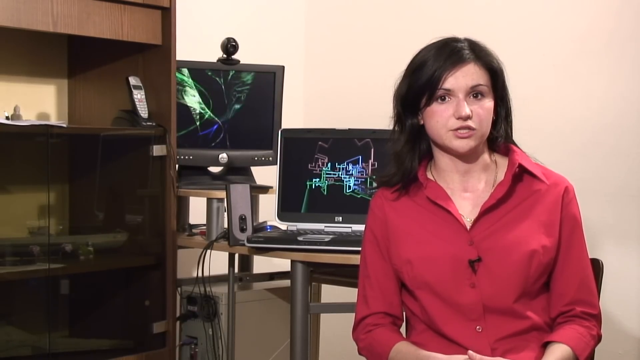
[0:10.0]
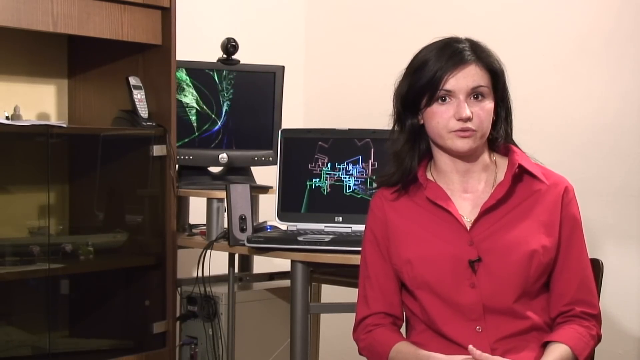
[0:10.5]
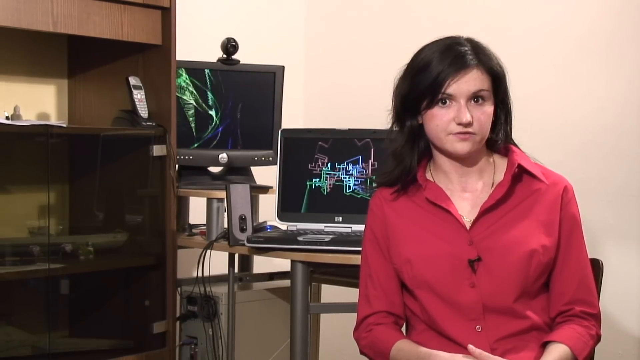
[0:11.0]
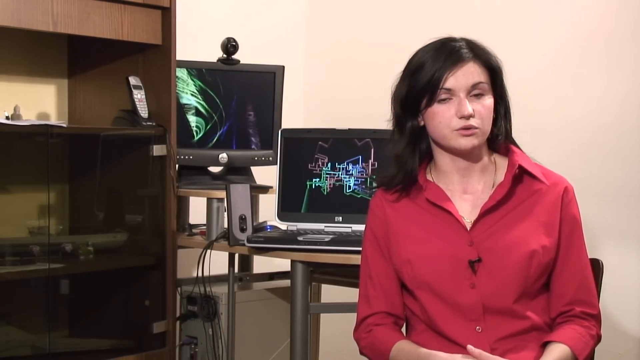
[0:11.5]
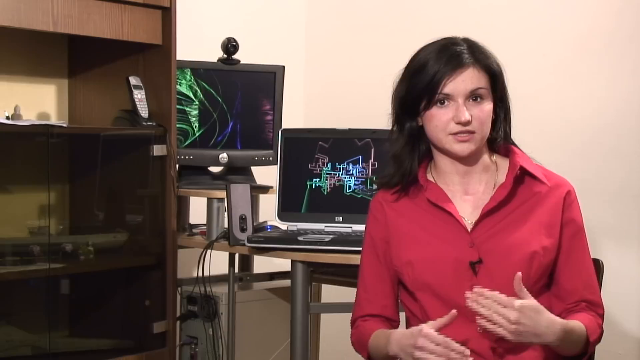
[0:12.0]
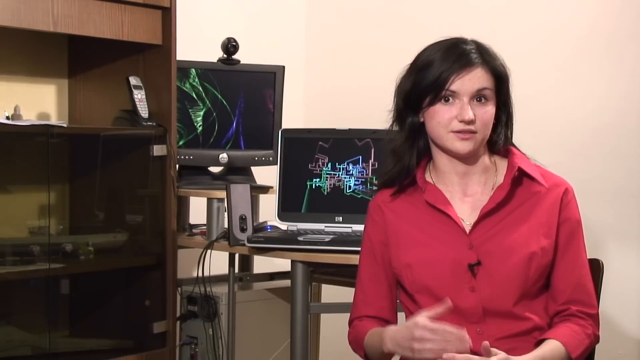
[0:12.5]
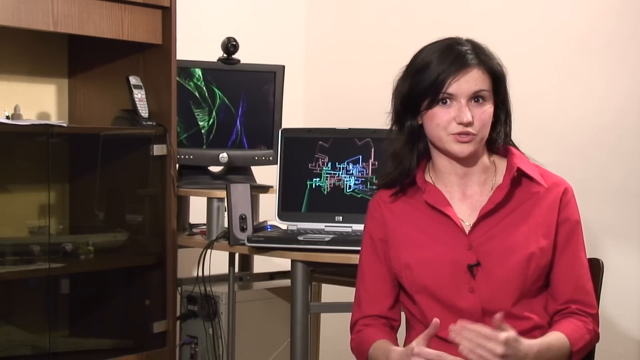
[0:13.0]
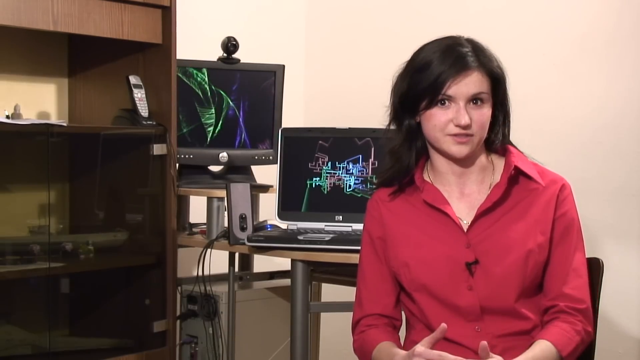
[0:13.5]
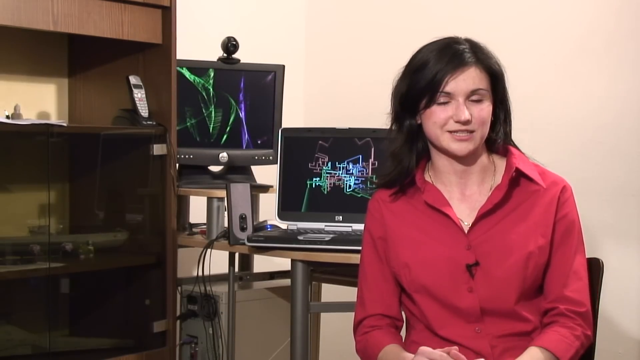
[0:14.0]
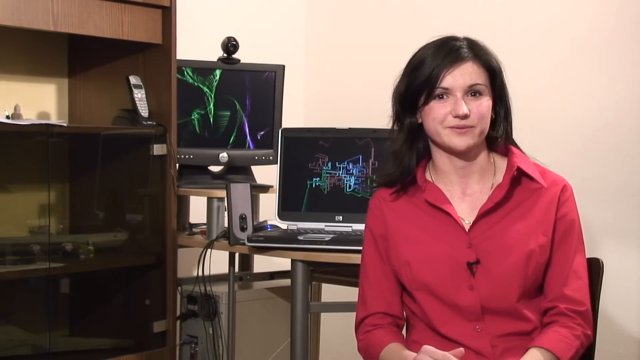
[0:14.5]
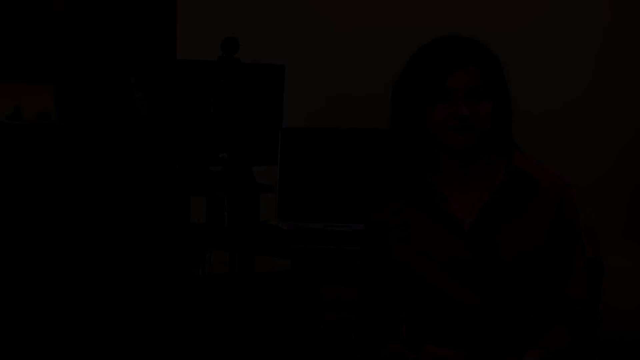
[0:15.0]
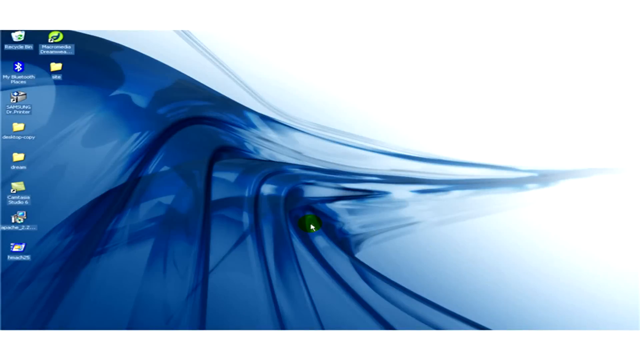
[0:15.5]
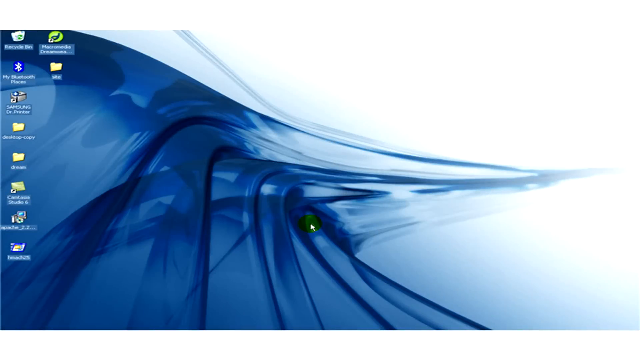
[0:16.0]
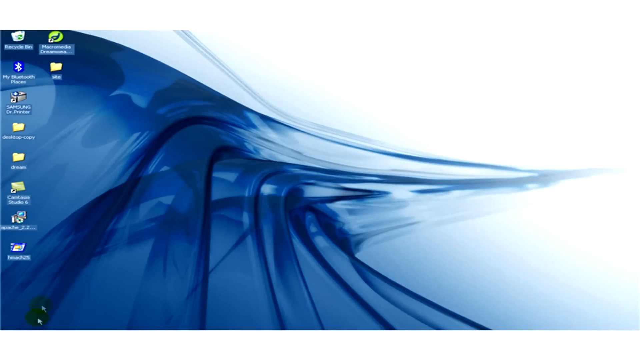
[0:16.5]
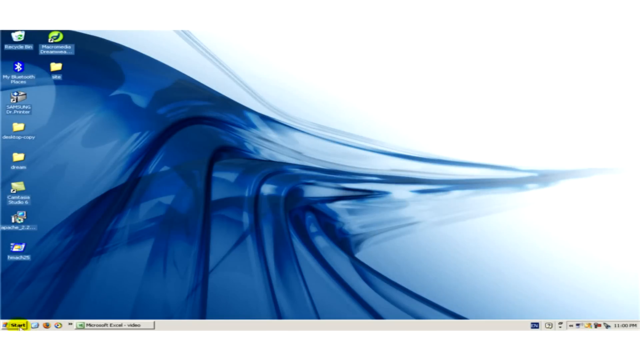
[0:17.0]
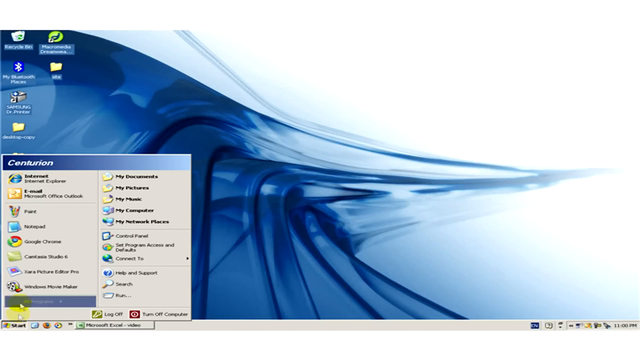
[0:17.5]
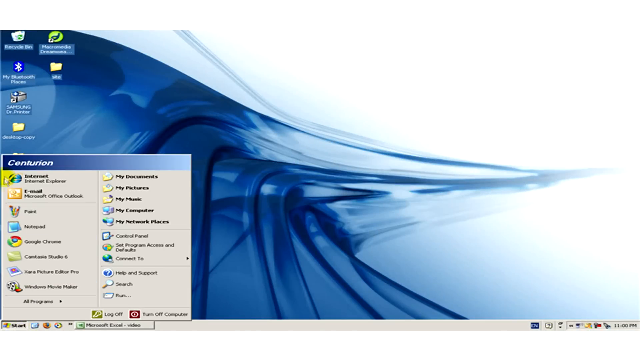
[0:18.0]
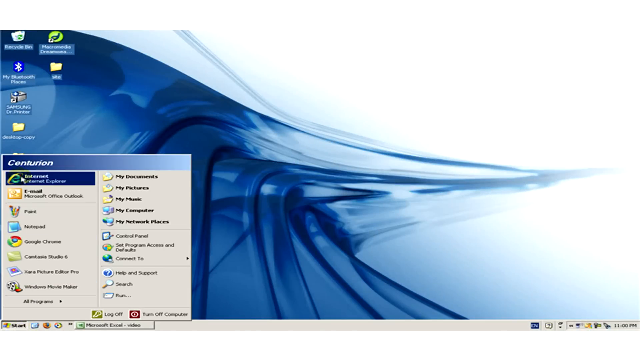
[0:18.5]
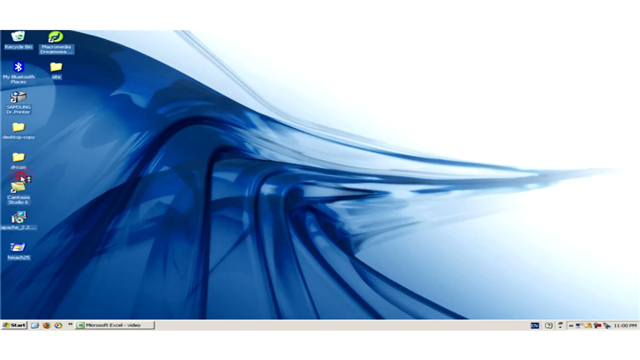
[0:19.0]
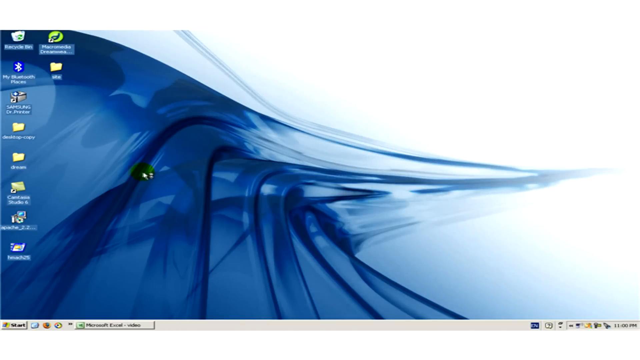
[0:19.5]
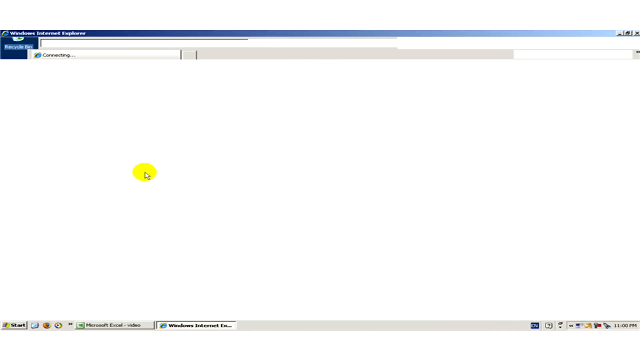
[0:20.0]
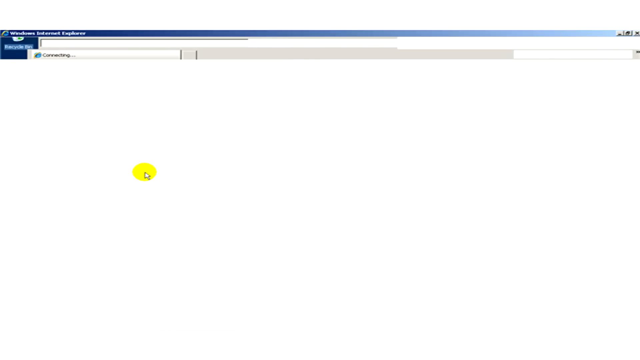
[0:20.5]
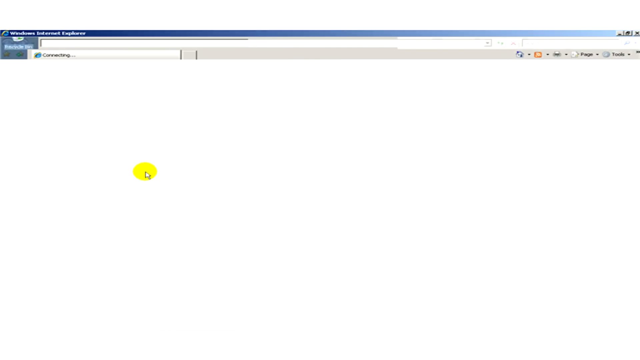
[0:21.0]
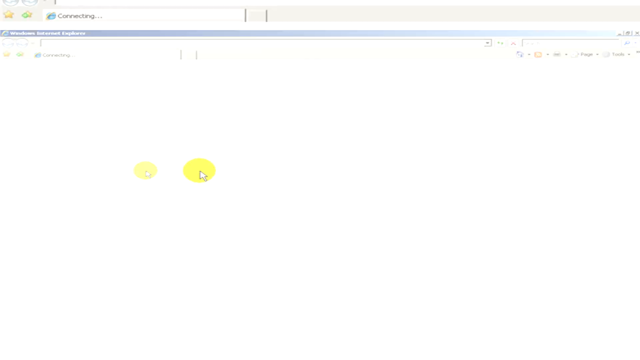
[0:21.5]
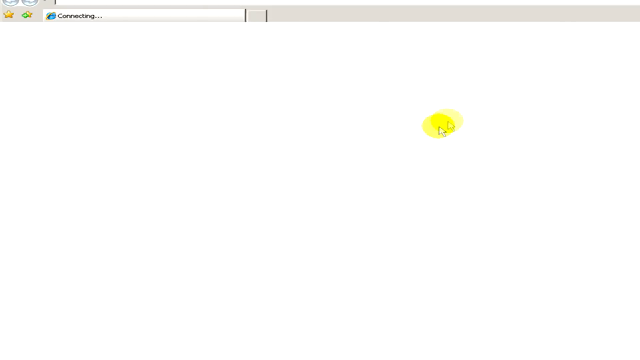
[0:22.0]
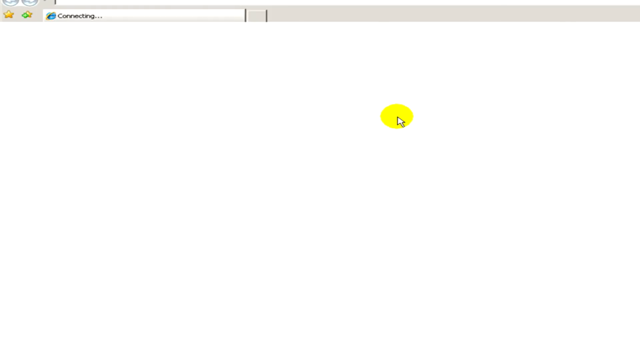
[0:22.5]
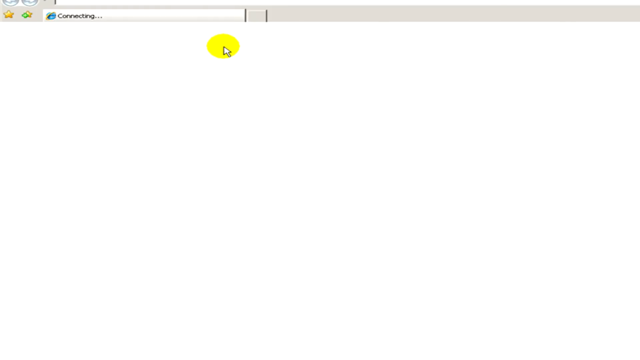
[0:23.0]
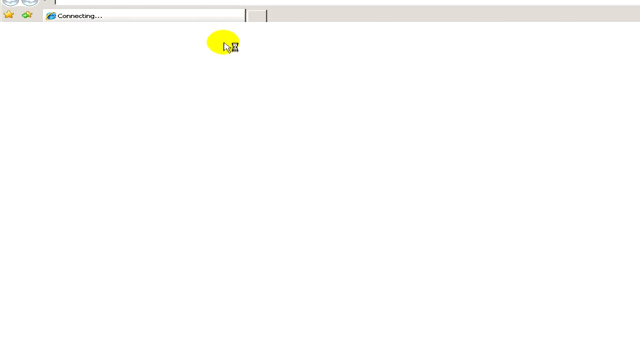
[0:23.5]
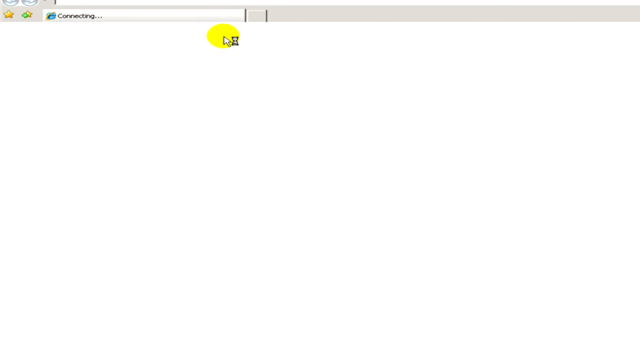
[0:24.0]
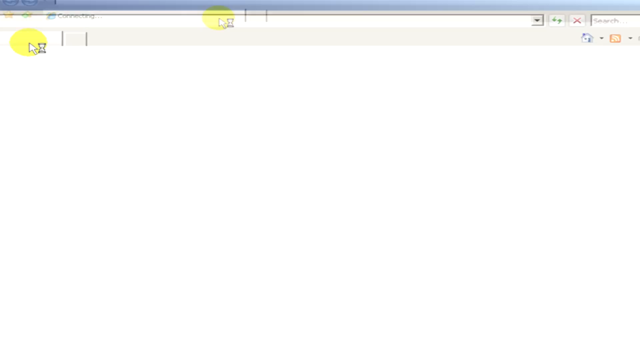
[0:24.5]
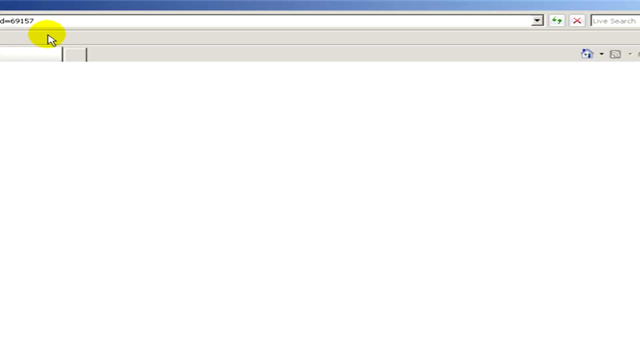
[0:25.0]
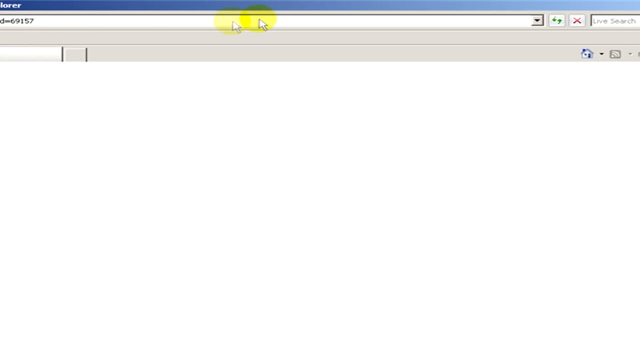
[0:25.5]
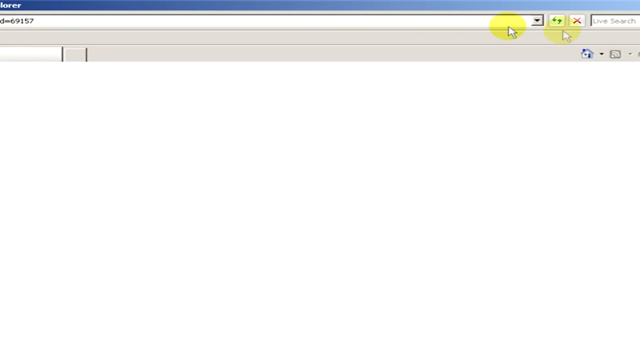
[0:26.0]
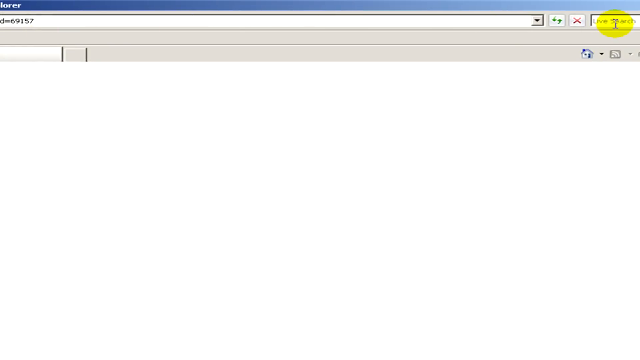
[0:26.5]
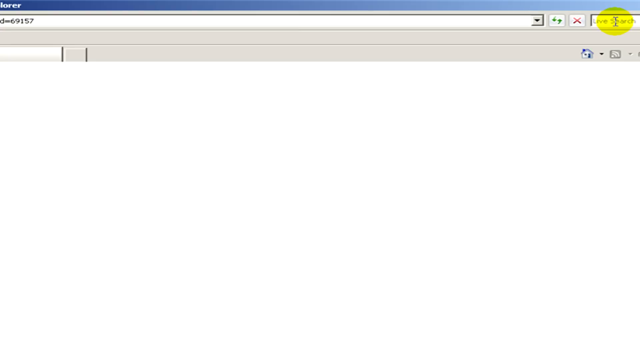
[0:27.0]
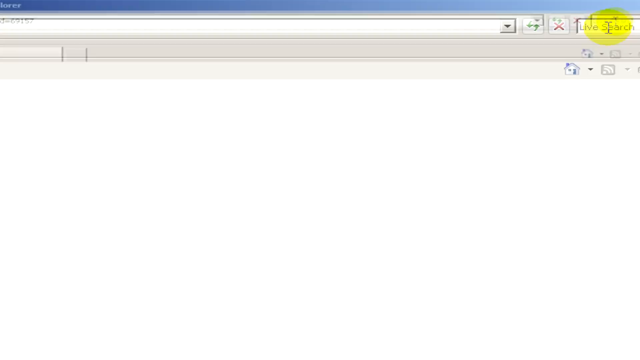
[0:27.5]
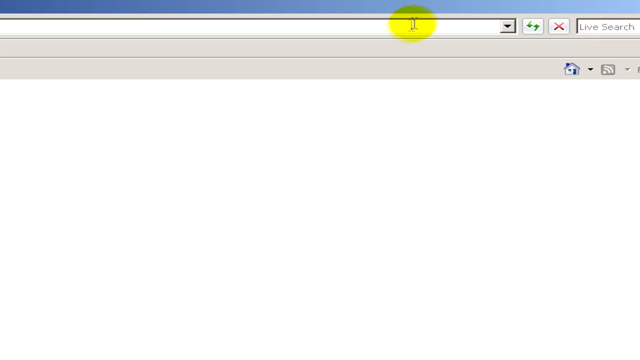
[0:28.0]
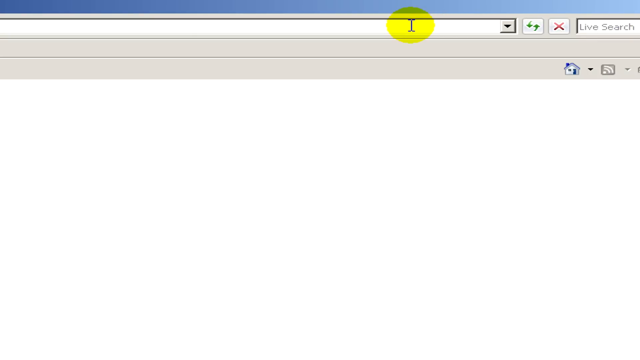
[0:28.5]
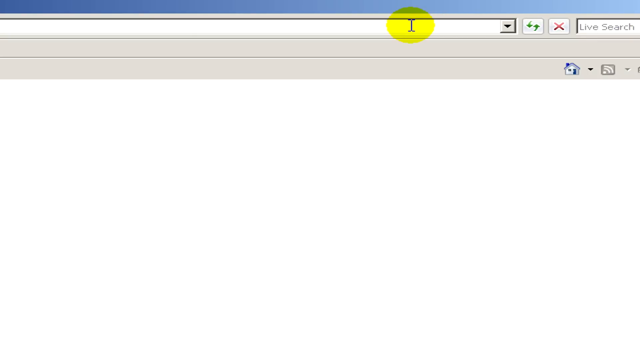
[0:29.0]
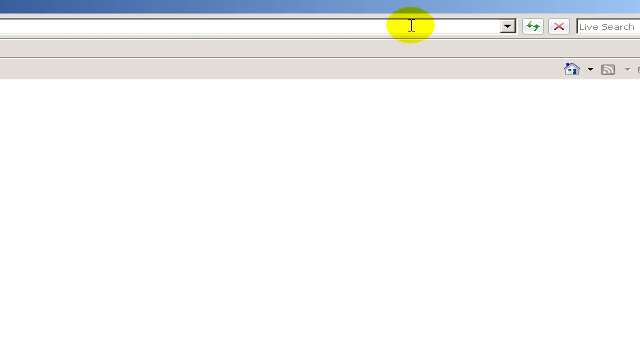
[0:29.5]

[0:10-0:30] The woman seems to keep talking in the same setting, with the two monitors, one with a webcam, and the dresser and desk behind her. The scene then changes to a Windows desktop home screen with some applications on it and a bluish background design. The Windows version seems a bit older, potentially Windows 7. The cursor, which is kind of highlighted in yellow, goes up to Internet Explorer on the start bar, and Internet Explorer is opened and connects. The live search option is then used, with the cursor hovering over it.